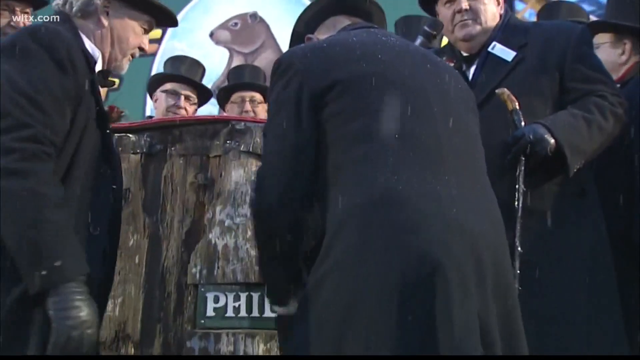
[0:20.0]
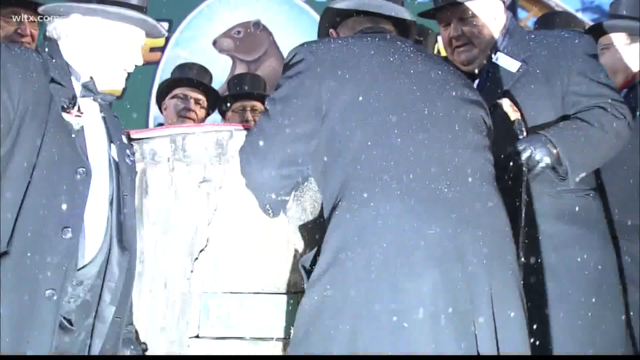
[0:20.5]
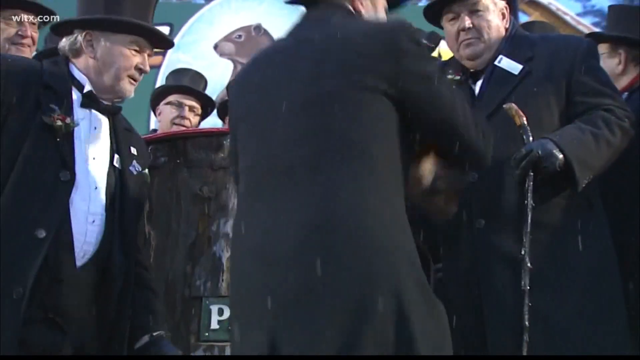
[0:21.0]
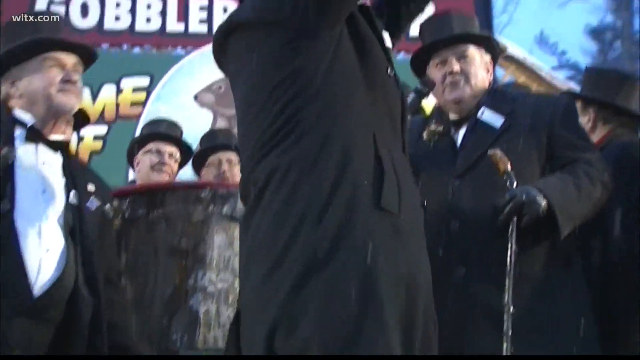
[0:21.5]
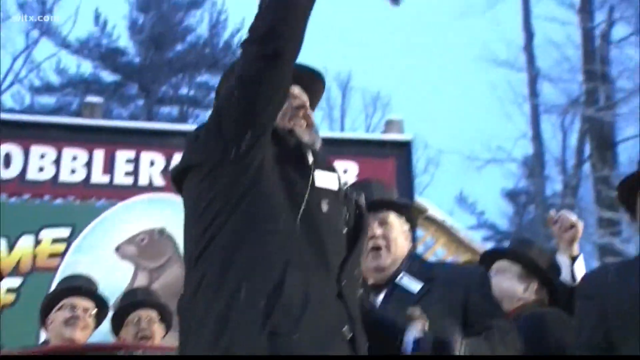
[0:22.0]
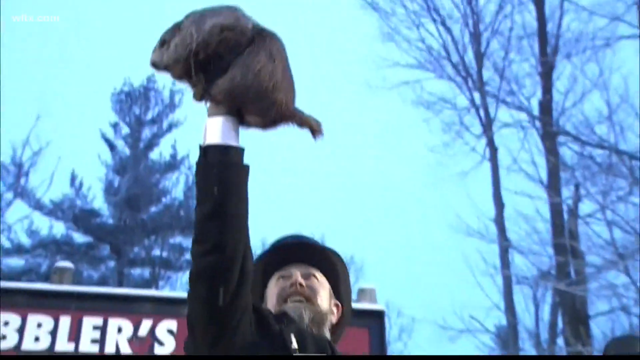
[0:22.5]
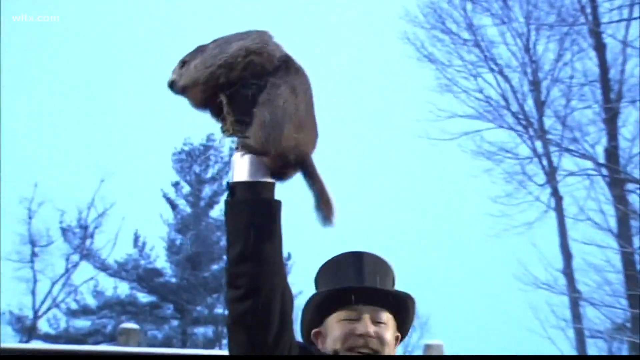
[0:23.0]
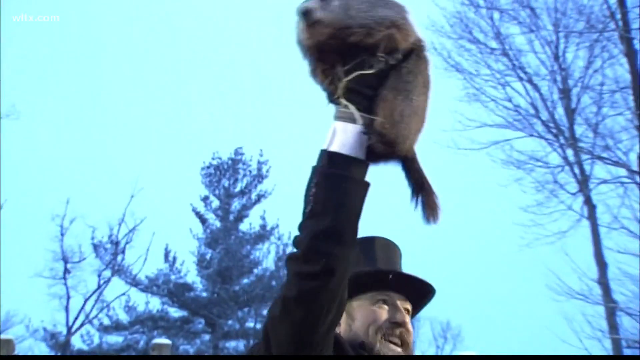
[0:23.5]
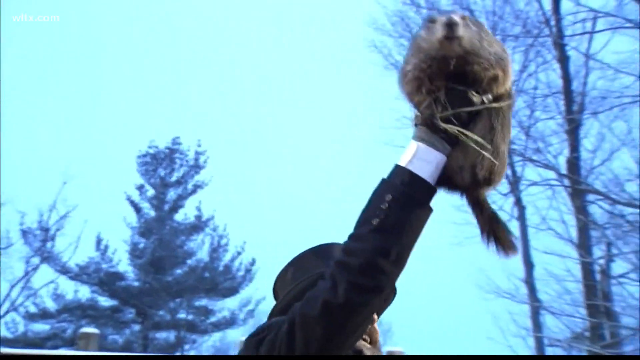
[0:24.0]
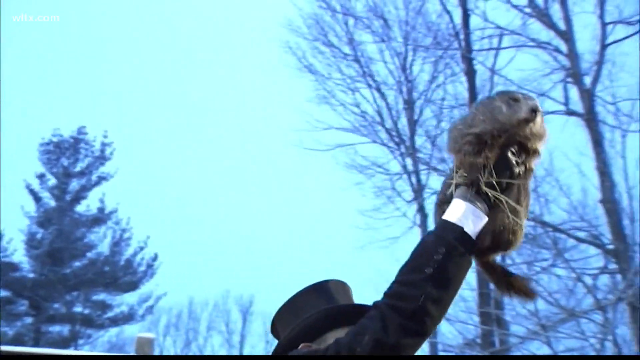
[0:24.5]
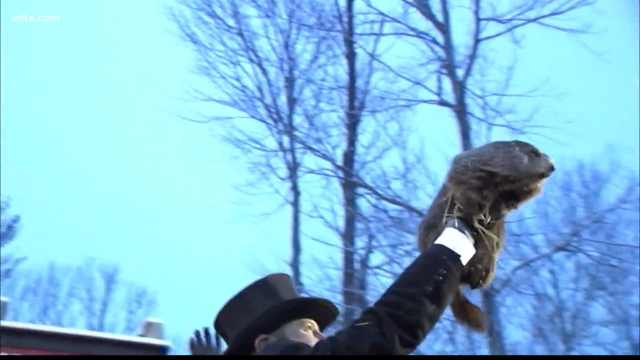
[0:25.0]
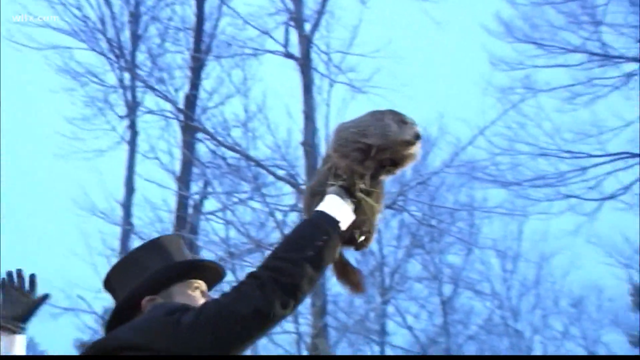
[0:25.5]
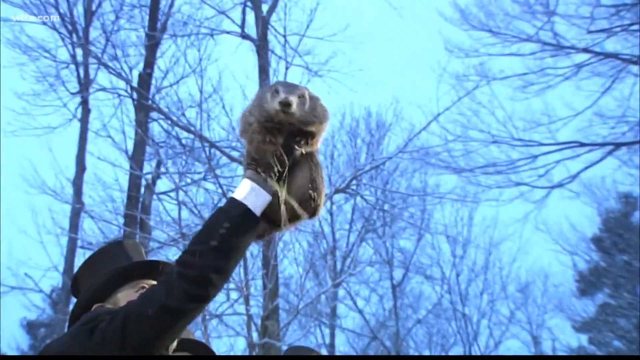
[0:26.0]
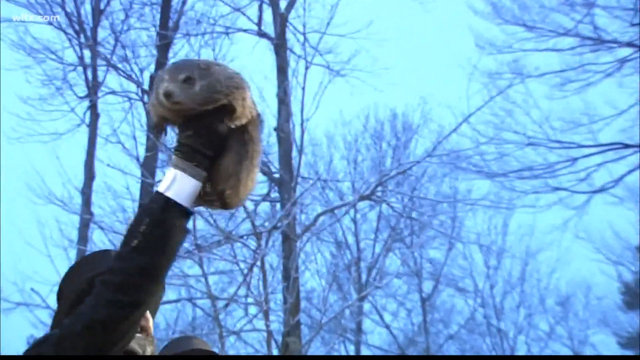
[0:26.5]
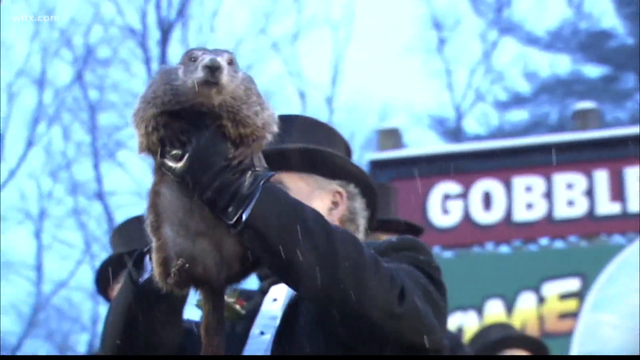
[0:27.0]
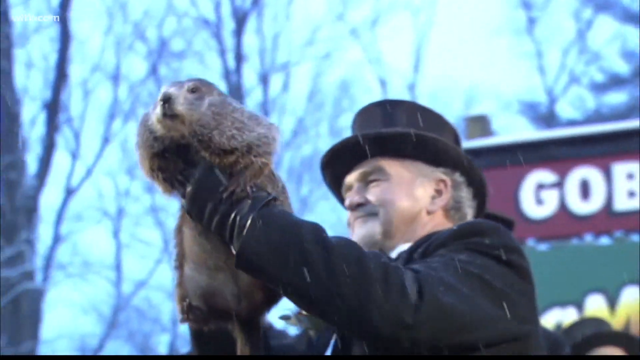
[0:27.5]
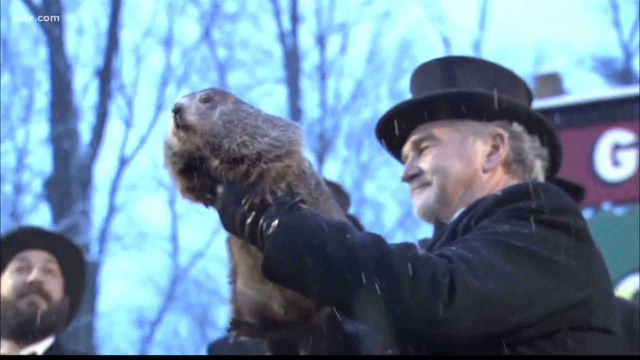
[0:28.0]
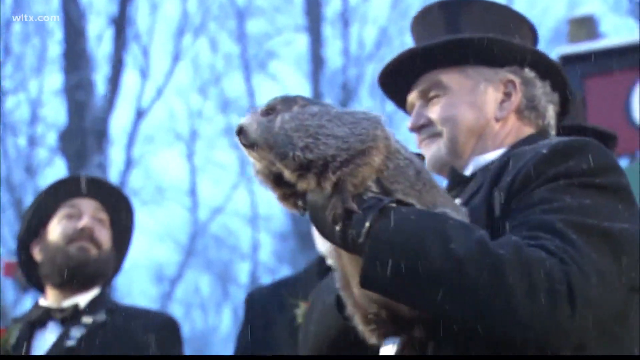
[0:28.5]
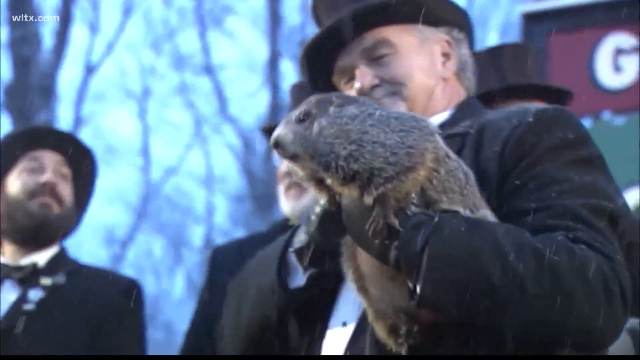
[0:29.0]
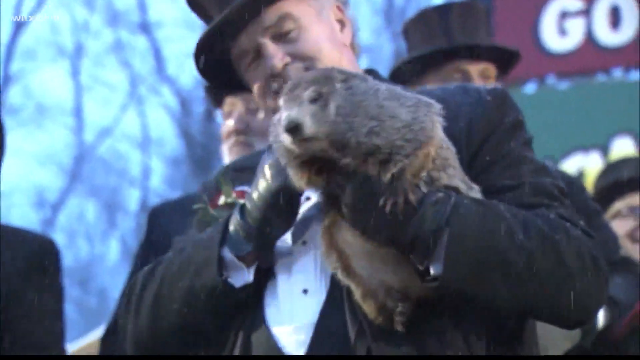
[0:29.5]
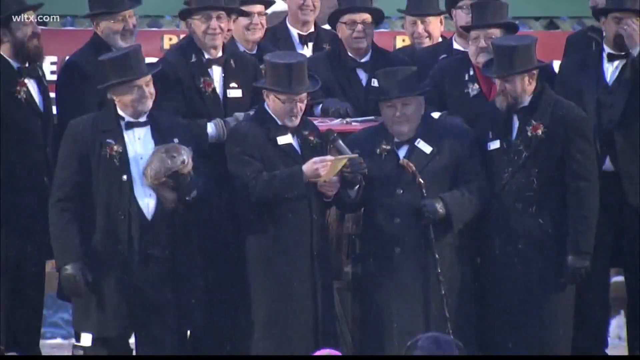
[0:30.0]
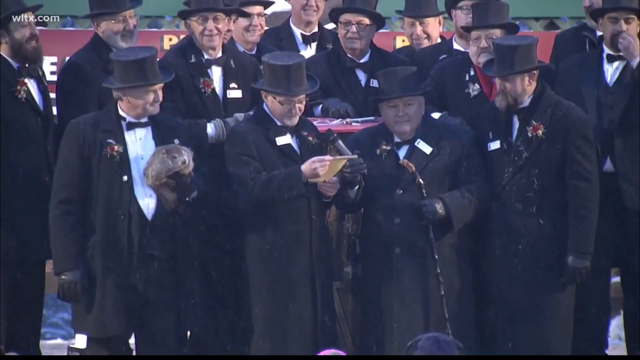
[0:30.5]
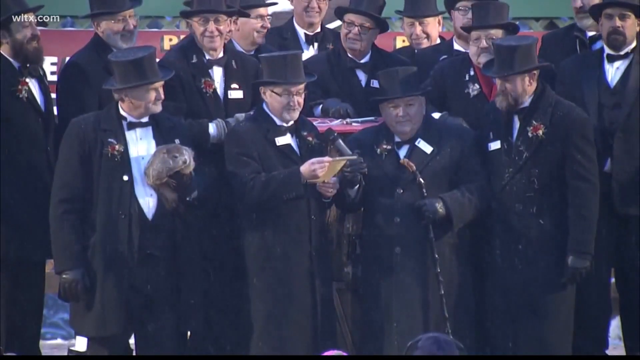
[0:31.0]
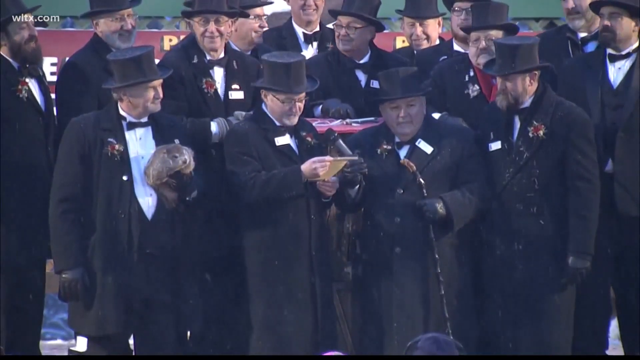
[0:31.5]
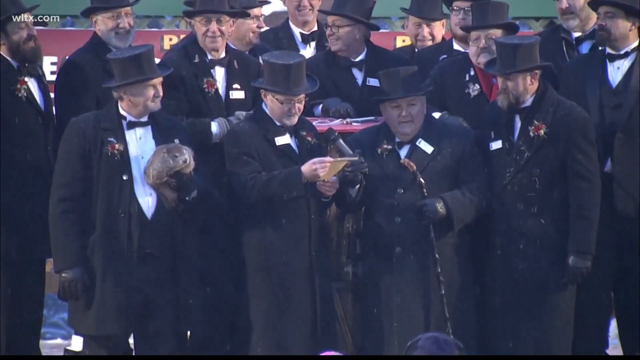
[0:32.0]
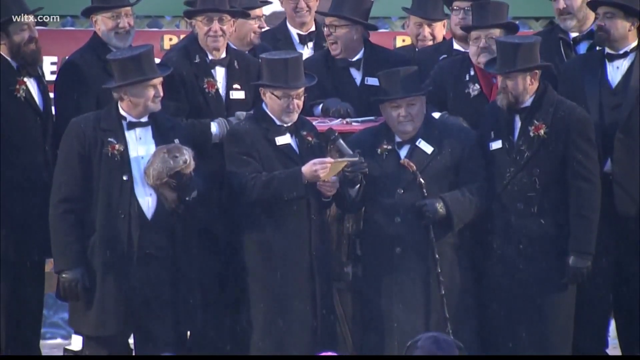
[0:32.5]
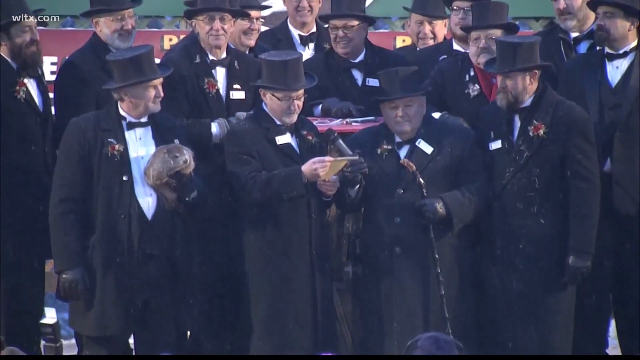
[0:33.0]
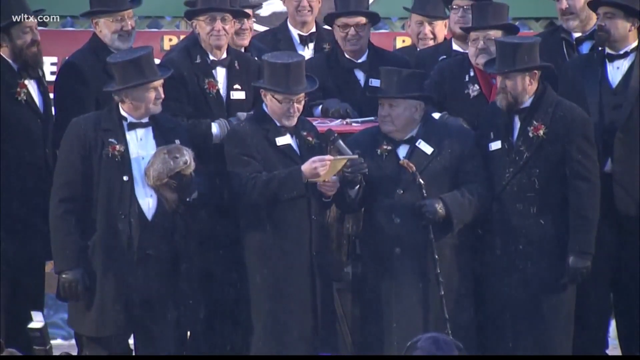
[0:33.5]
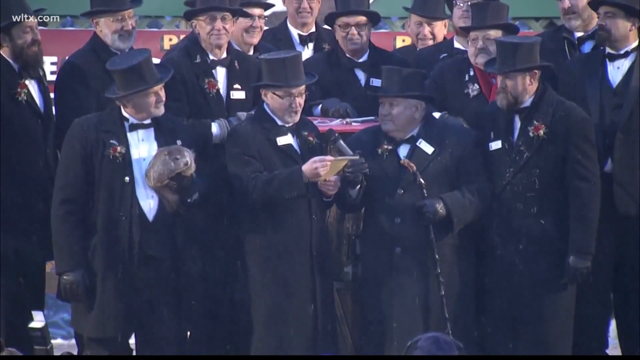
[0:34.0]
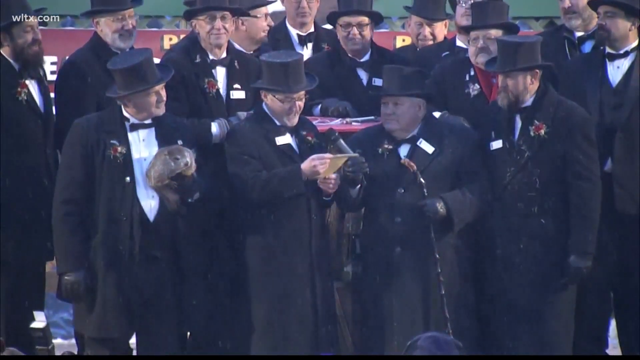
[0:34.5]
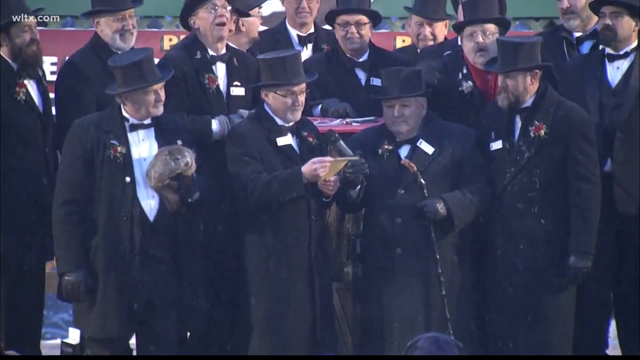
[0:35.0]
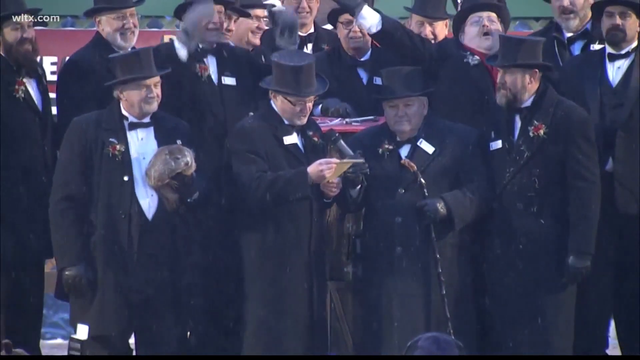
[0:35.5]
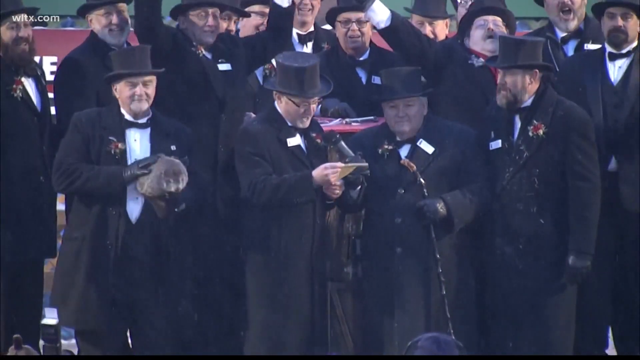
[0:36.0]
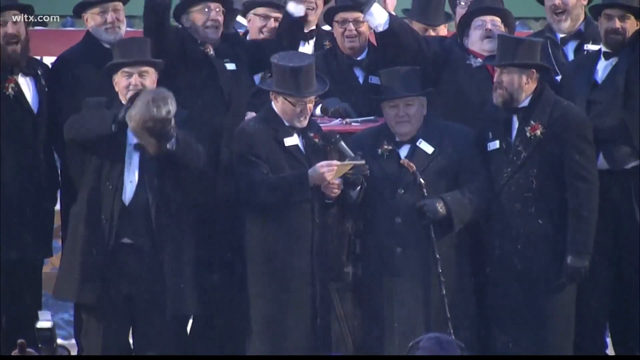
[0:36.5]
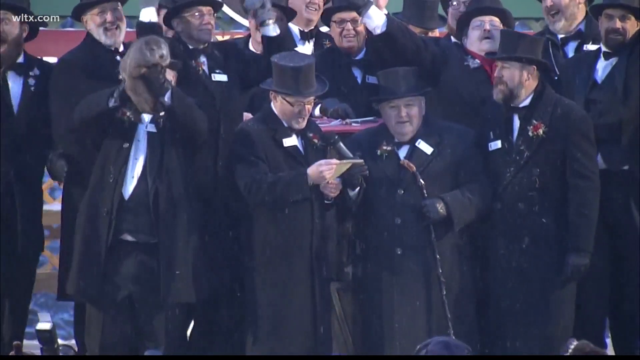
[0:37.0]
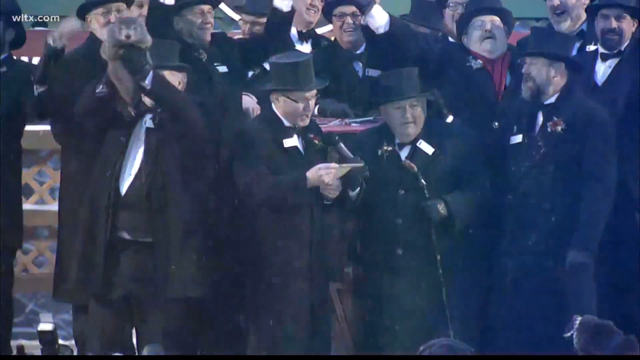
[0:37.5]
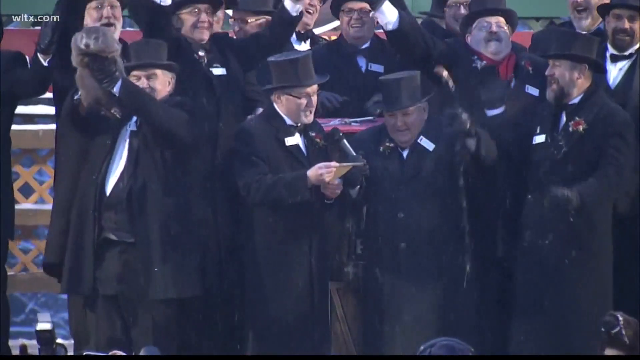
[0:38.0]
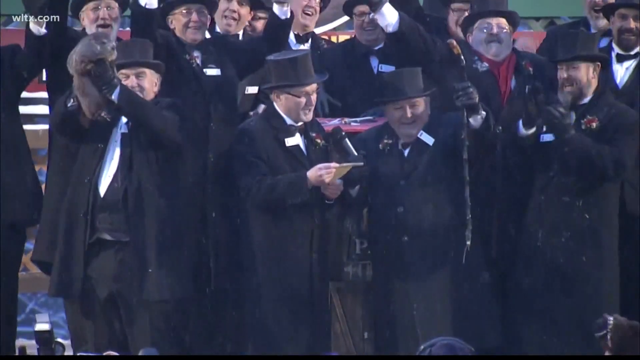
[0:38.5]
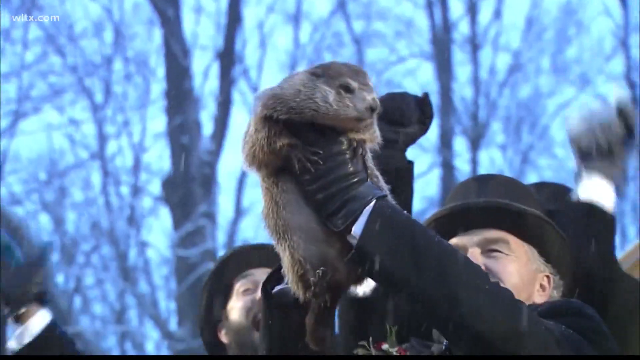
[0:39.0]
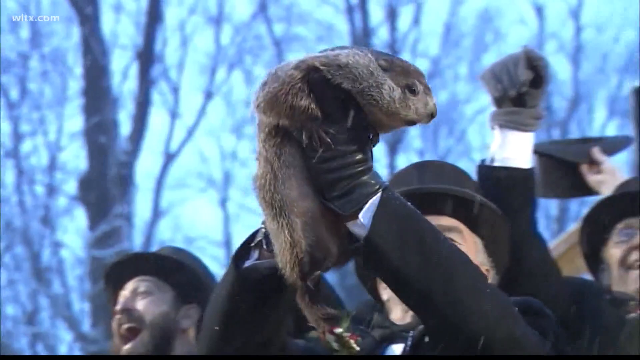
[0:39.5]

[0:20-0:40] The footage most likely shows the groundhog being pulled out at Gobbler's Knob on Groundhog Day, though it looks live rather than from the movie. A man in a black suit and black top hat, wearing a black glove, holds the groundhog up in one hand, and it looks like it is snowing. Several men are dressed up, all in black suit jackets with white collared shirts, bow ties and black top hats. One of the men holds the groundhog in his hand, another reads a small brown parchment paper, and another pulls up the mic as they read, apparently, whether there will be six more weeks of winter or an early spring. It looks like it is snowing. They then start cheering, and the man with the groundhog holds it up in the air.